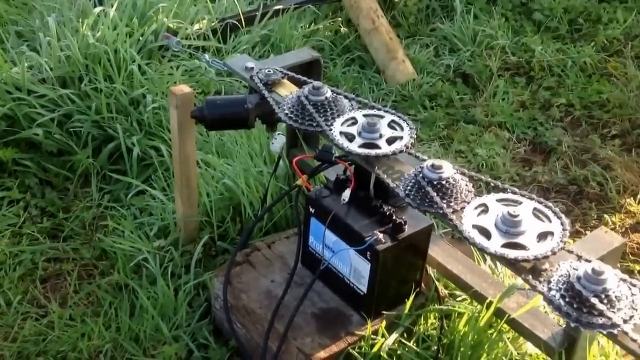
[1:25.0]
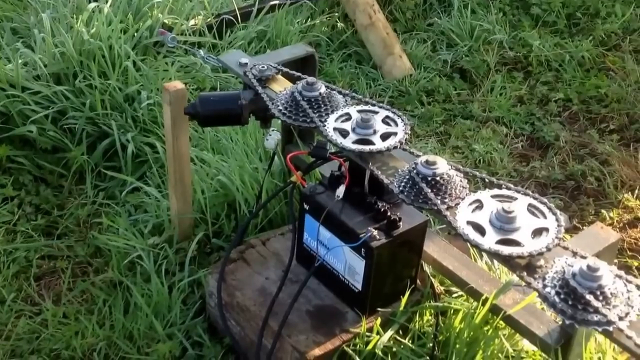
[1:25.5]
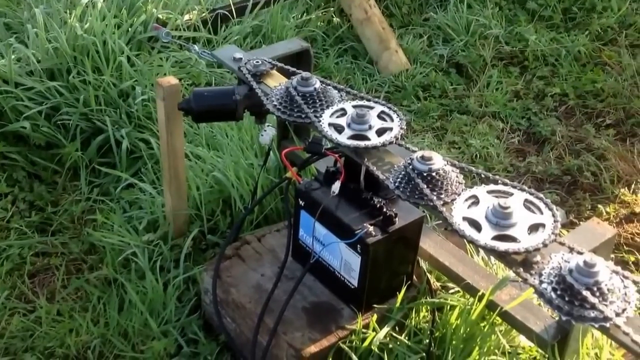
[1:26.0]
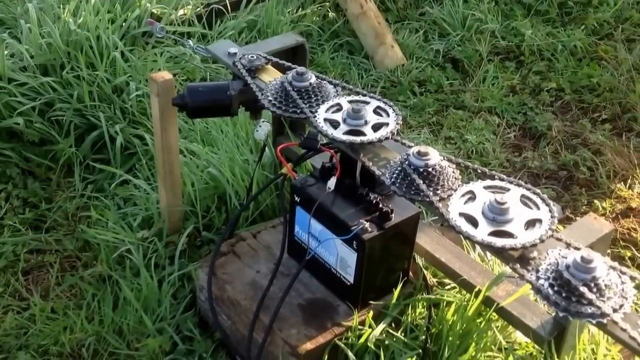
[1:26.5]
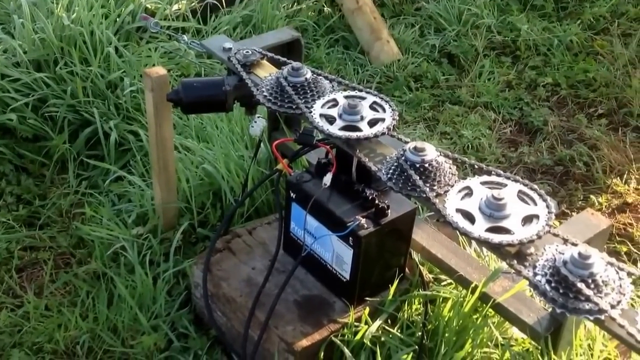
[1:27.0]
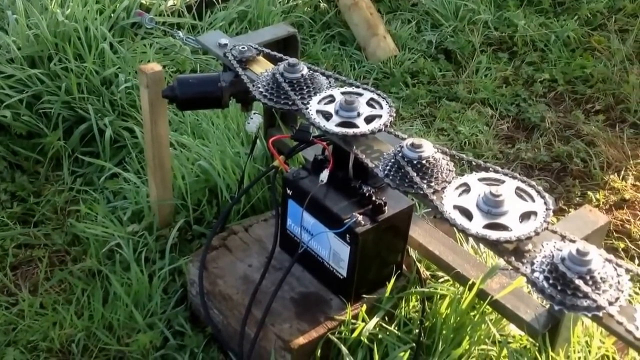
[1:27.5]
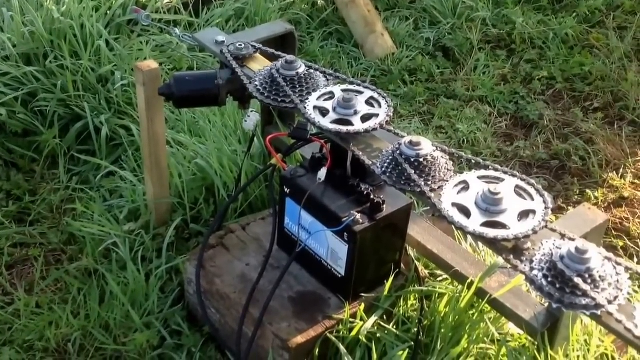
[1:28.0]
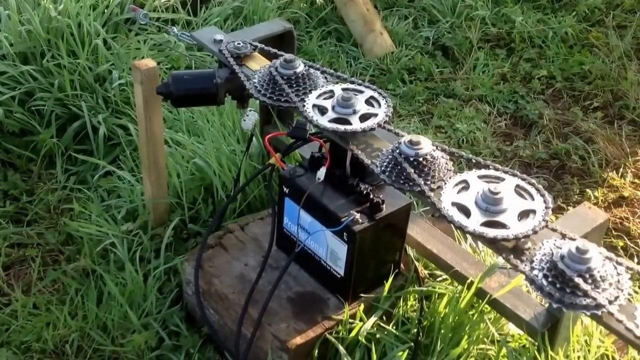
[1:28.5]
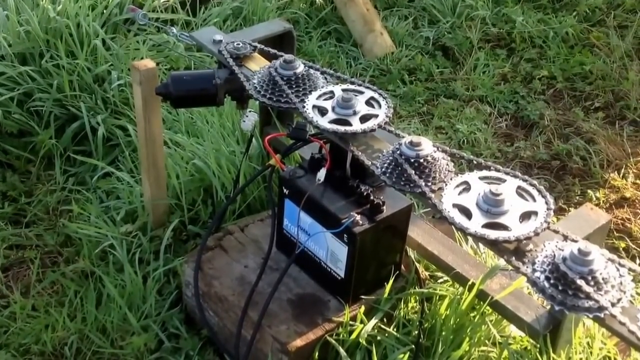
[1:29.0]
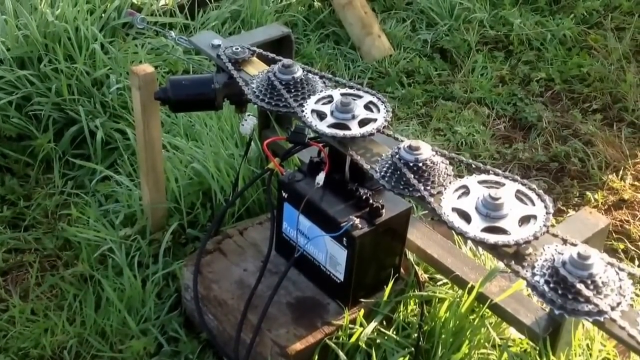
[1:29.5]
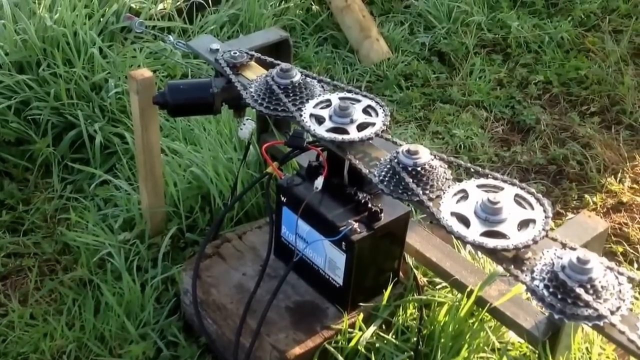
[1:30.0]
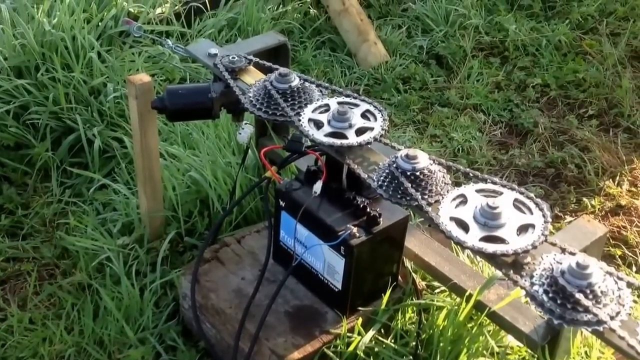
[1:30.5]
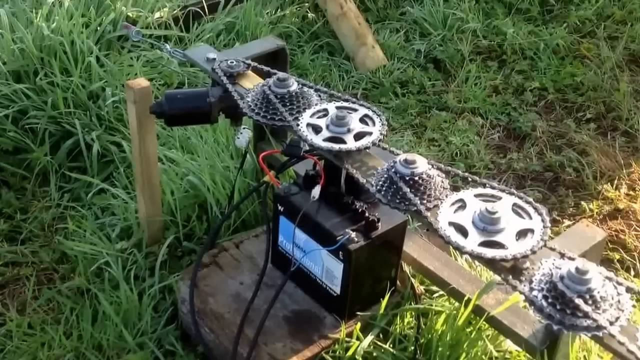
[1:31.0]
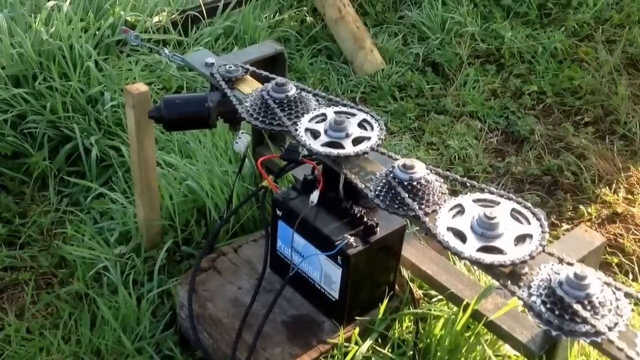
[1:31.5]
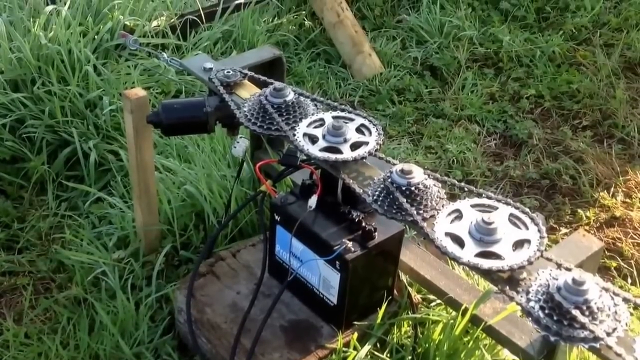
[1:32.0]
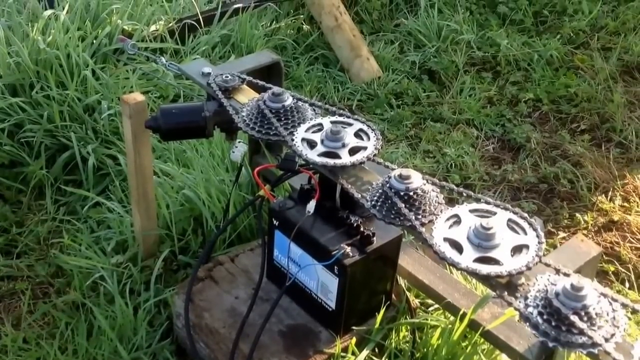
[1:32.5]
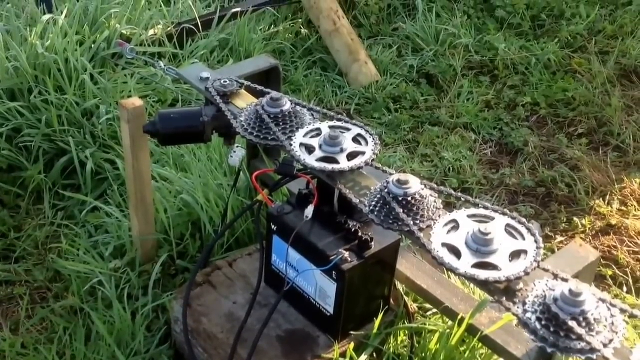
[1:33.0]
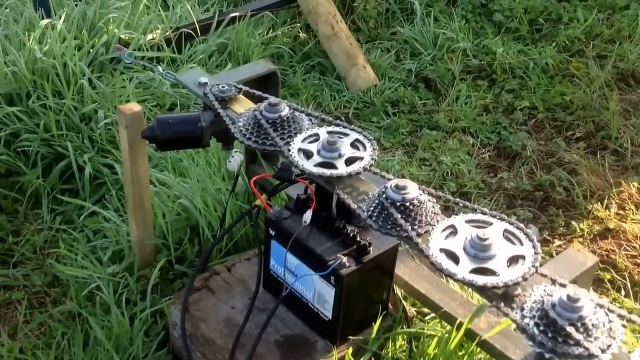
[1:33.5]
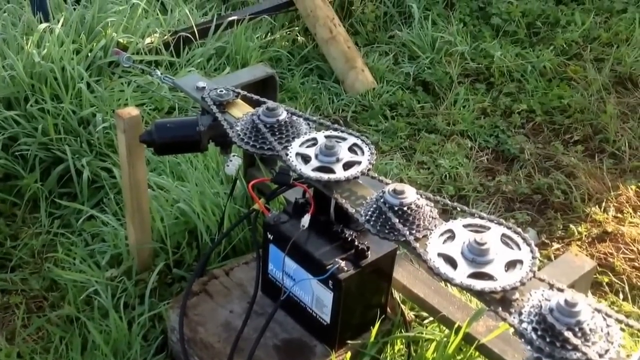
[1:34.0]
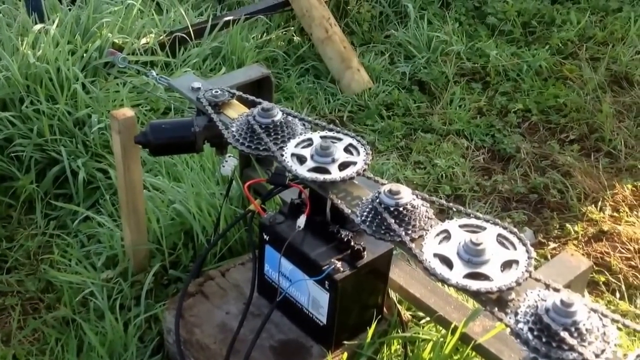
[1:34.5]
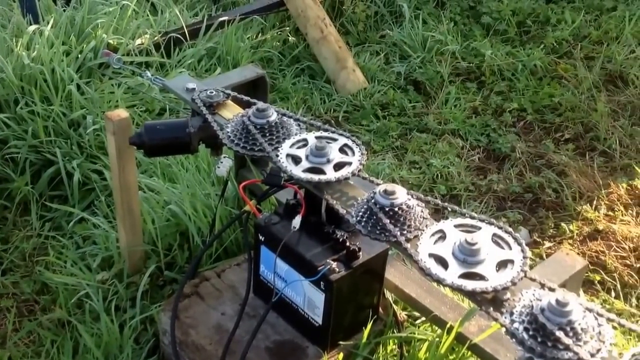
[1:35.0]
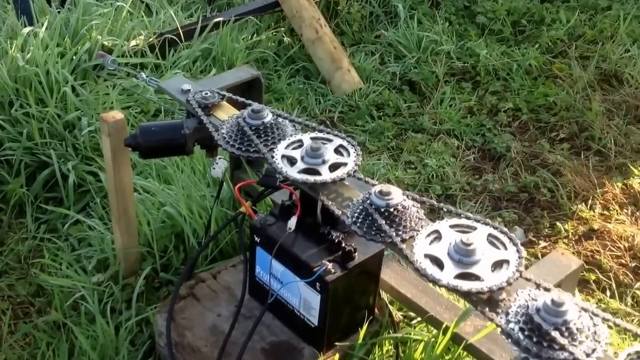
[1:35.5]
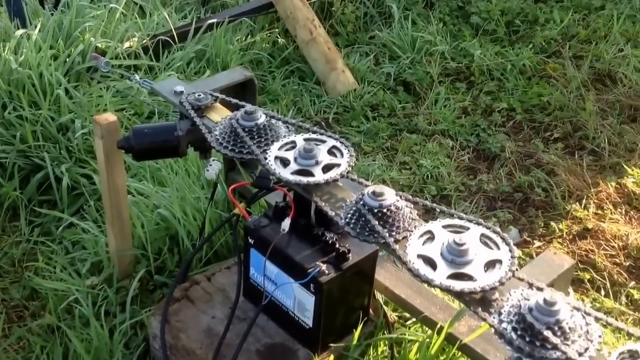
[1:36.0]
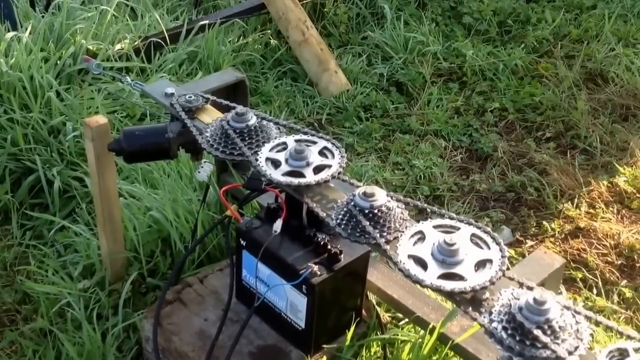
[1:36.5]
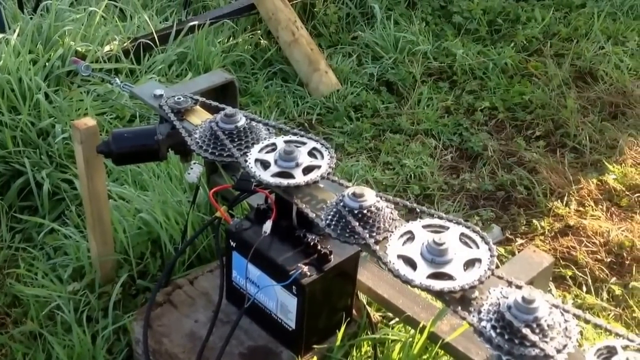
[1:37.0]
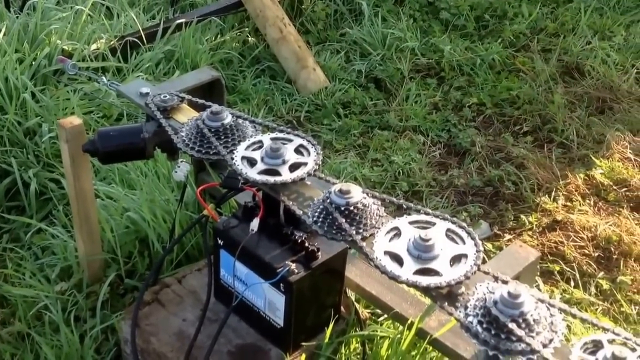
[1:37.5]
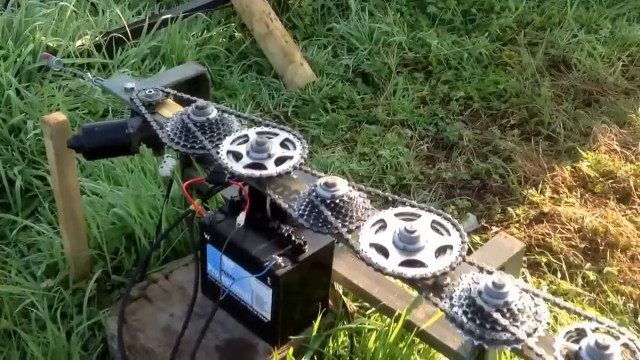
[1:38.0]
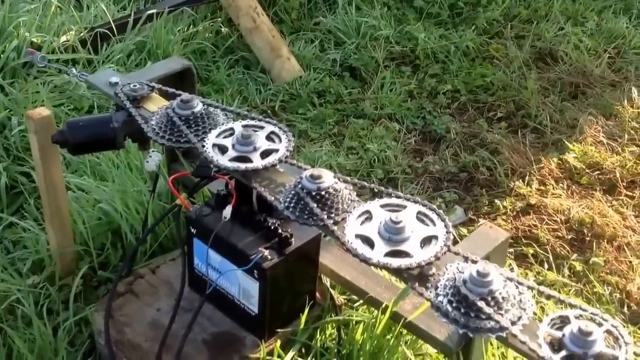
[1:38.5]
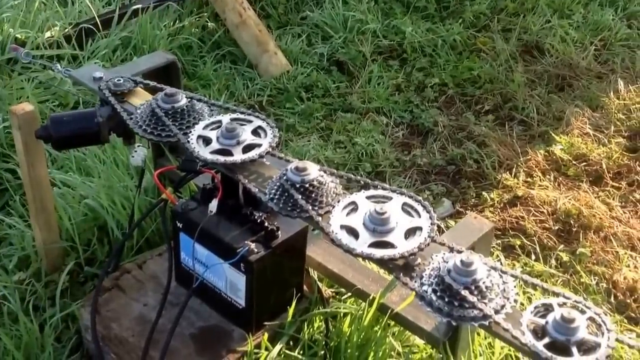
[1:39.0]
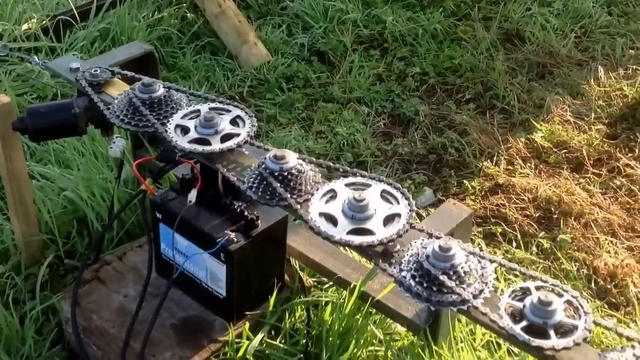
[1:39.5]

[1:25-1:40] A close-up shows a horizontal metal rod with discs and chains attached to it, creating a sort of pulley system. The rod has been fixed onto some wooden pegs. Beside the pulleys is a black box that looks like some sort of battery. The black box has a blue panel on its left side, and wires are attached to its terminals. The camera focuses on this view for a while, showing the arrangement of the equipment from the top, then slowly pans slightly while still focusing on the battery and the pulley system. Green grass is visible; the grass toward the right side is short and the grass toward the left side is a bit longer.